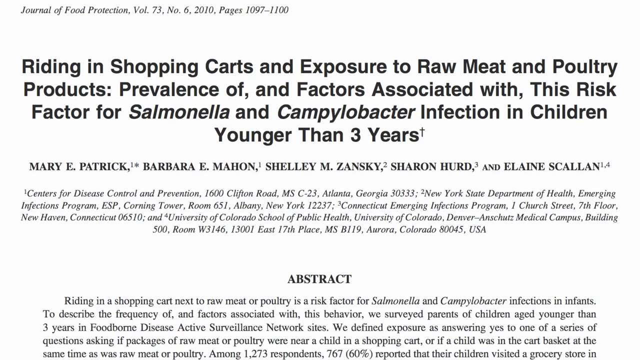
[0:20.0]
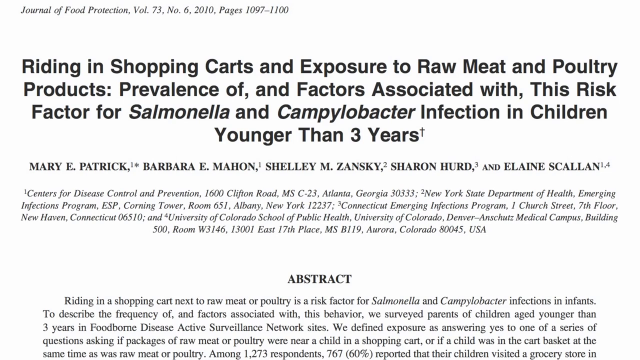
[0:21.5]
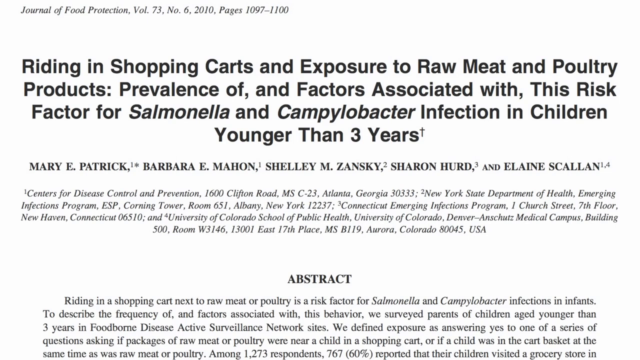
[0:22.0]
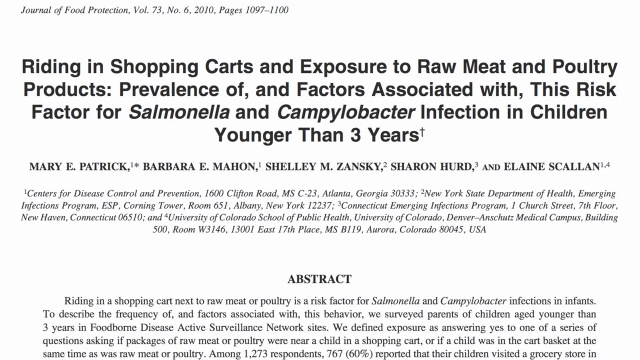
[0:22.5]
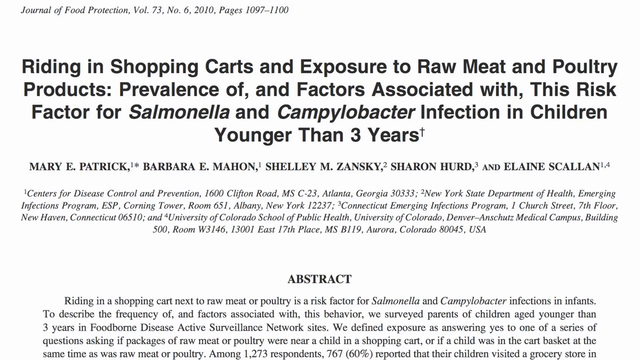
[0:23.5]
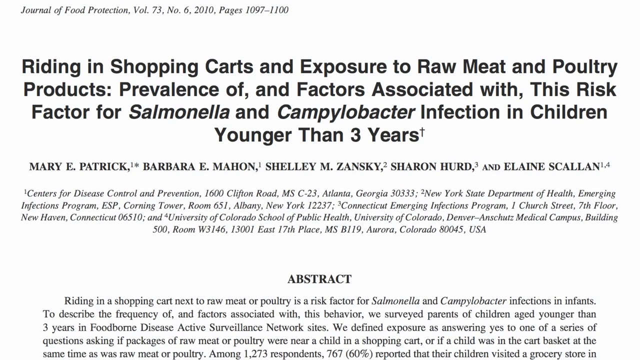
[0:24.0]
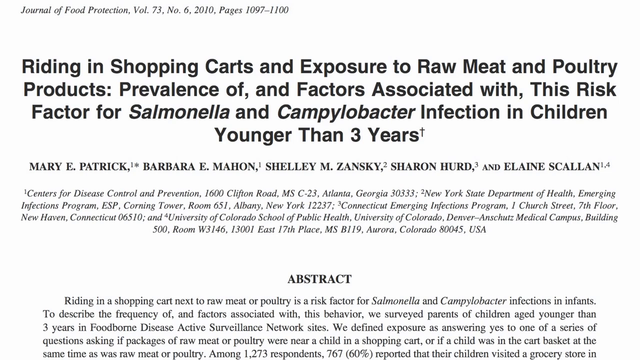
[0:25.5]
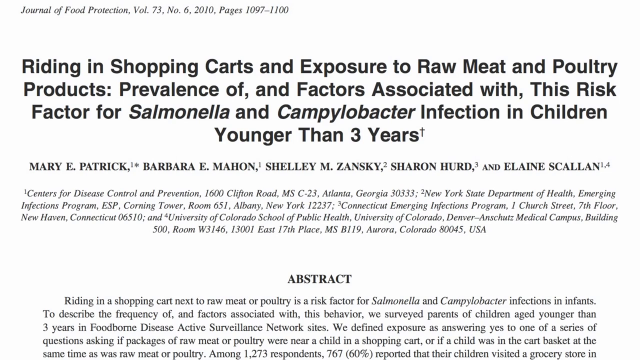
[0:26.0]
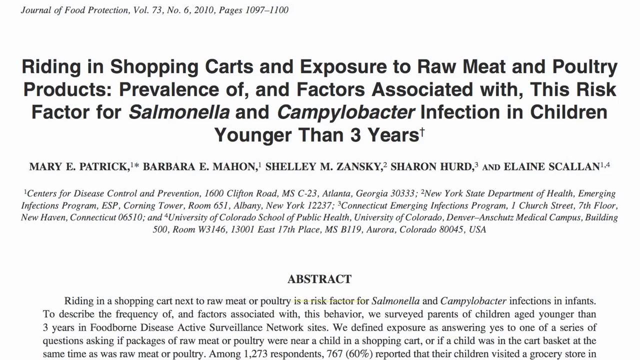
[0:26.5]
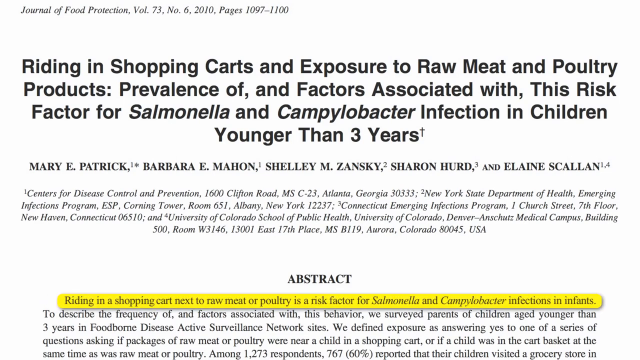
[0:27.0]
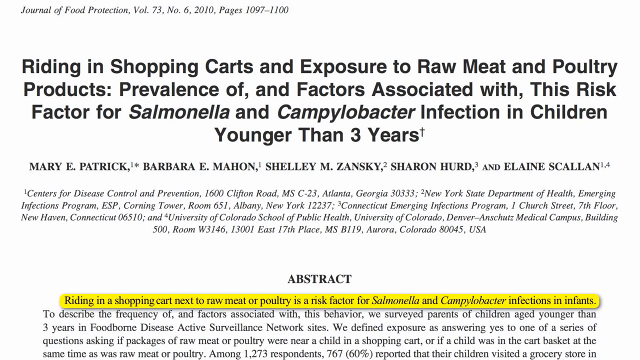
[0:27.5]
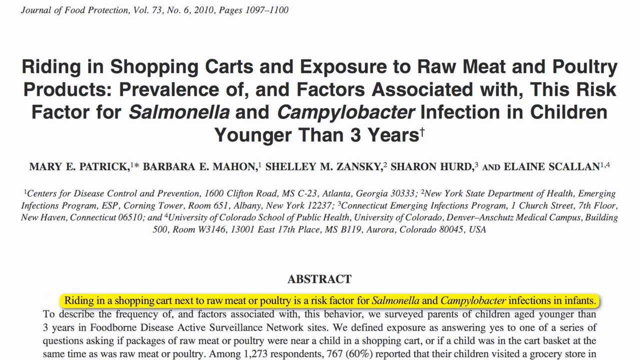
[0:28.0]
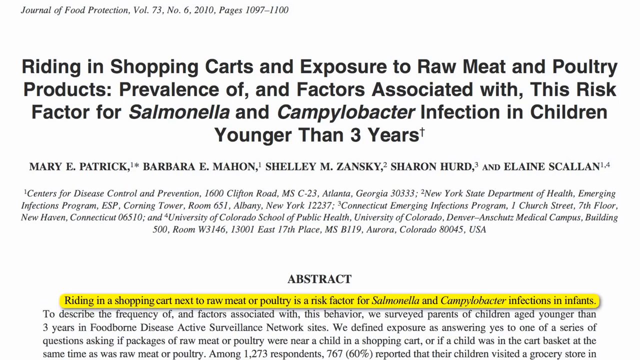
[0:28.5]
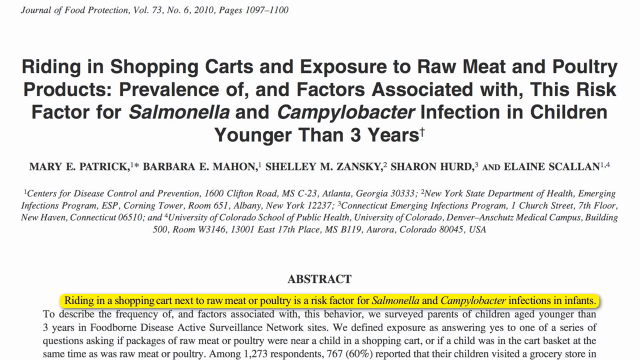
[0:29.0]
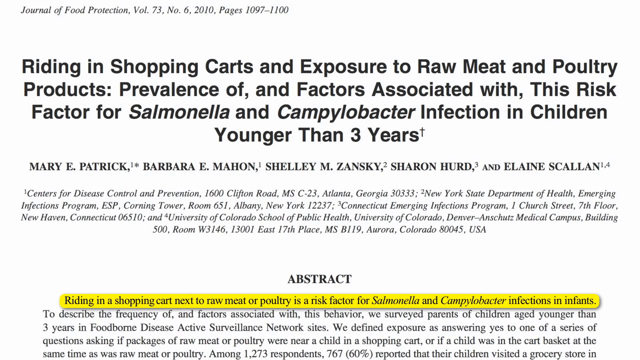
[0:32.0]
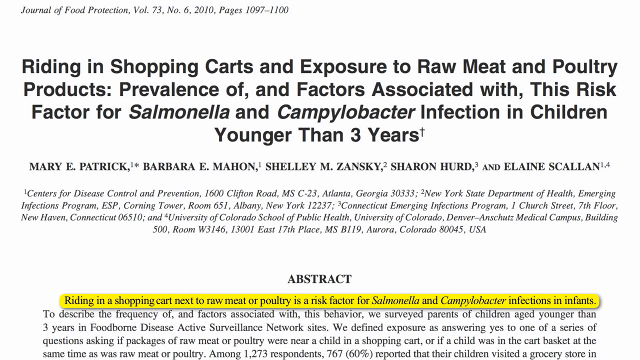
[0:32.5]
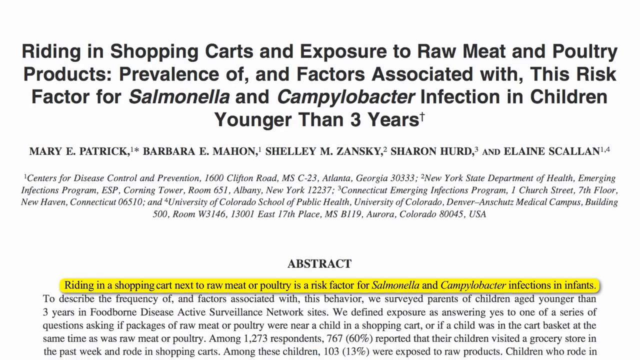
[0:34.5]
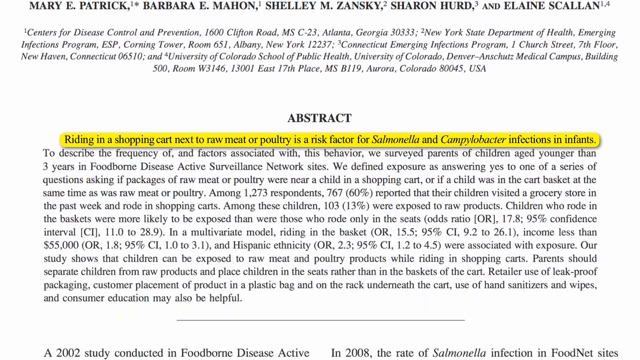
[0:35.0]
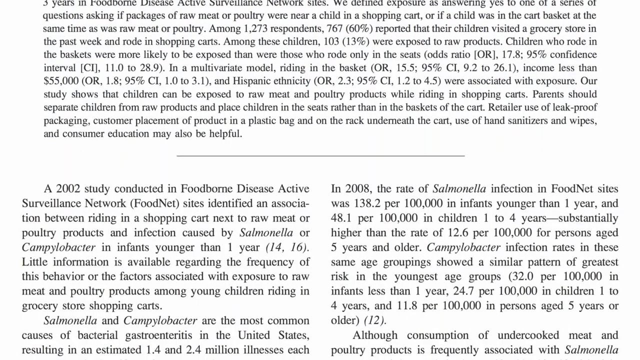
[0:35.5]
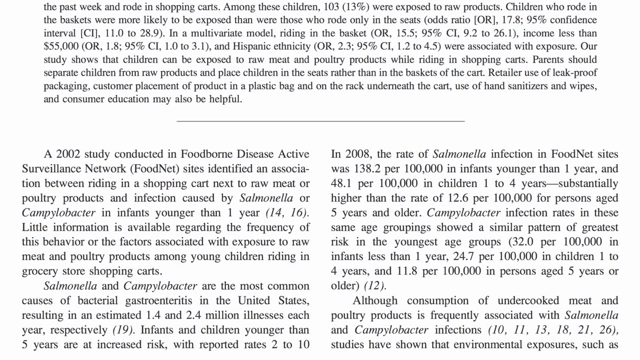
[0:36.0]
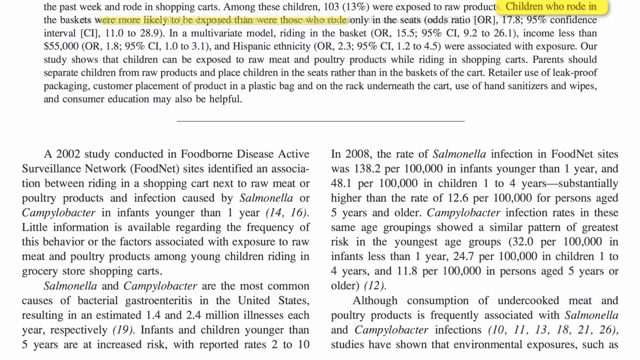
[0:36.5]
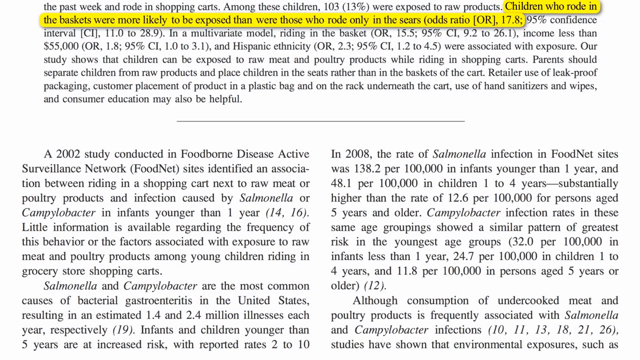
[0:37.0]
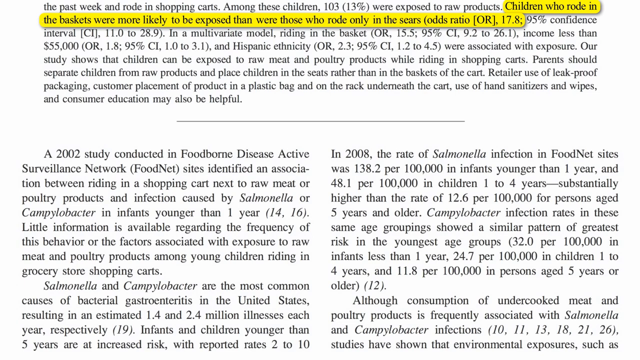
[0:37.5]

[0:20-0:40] A white background with a sort of gradient effect rolls into gray and then black. At the top are the words "Journal of Food Production, volume 73, number 6, 2010, pages 1097 through 1100." Beneath this, in bold black letters, is "riding in shopping carts and exposure to raw meat and poultry products, prevalence of and factors associated with this risk factor of Salmonella and Campylobacter infection in children younger than three years." Below that, in smaller bold letters, are the names "Mary E. Patrick, Barbara E. Mahon, Shelly M. Zansky, Sharon Hurd, and Elaine Scallon." Beneath the names, text indicates the message is from the Centers of Disease Control and Prevention, and the lower portion of the screen contains an abstract. A yellow highlighted area then pops up under the abstract reading "riding in shopping carts next to raw meat or poultry is a risk factor for salmonella." The screen then scrolls down through information about these risk factors written out like a medical journal. More words become highlighted in yellow at the top of the screen: "Children who rode in the baskets were more likely to be exposed than were those who rode only in the," followed by an odds ratio of 17.8.